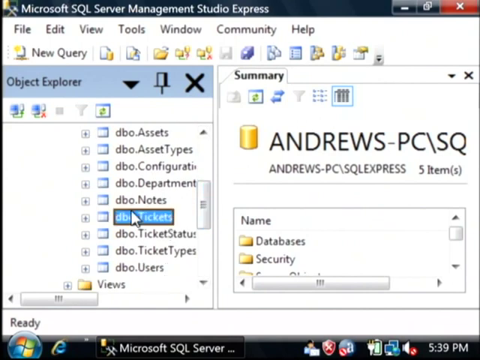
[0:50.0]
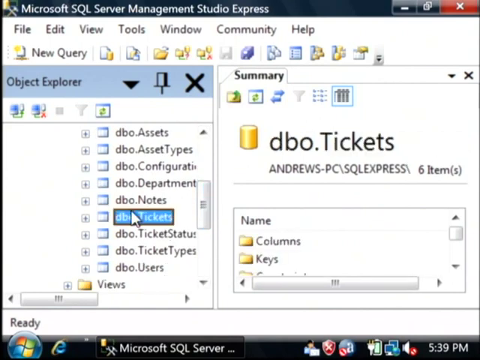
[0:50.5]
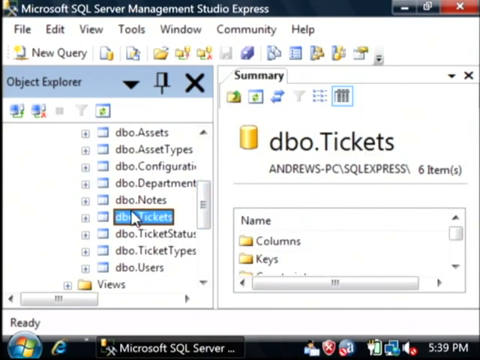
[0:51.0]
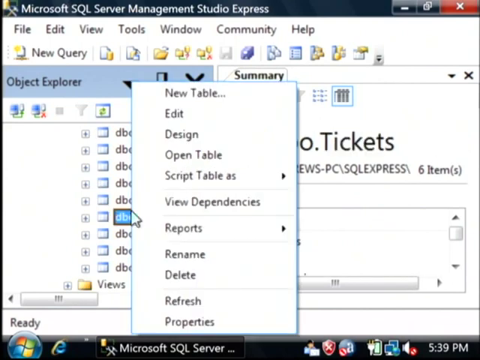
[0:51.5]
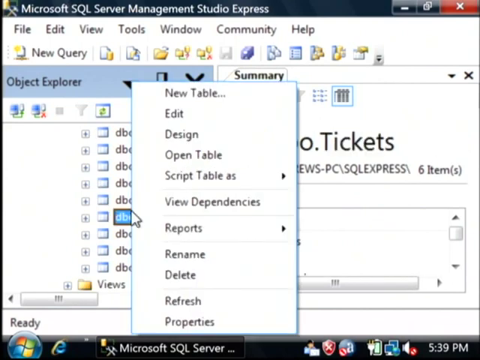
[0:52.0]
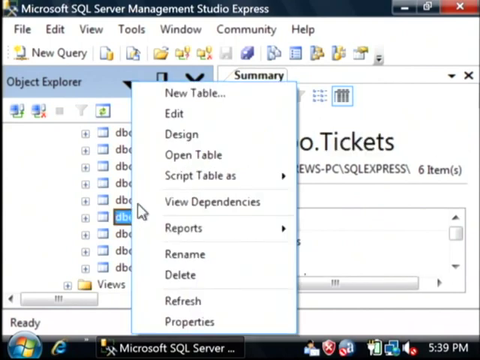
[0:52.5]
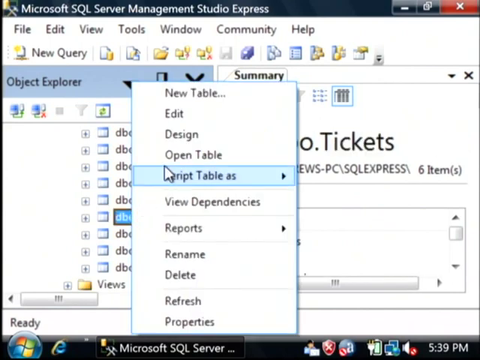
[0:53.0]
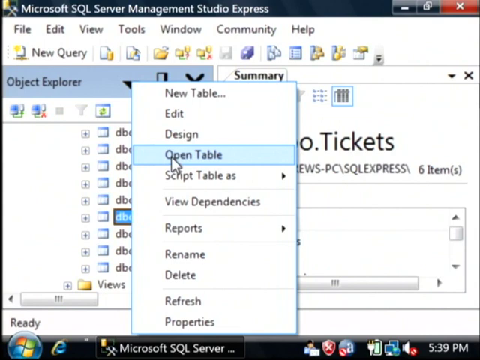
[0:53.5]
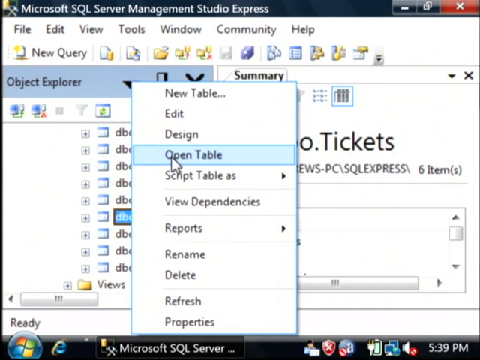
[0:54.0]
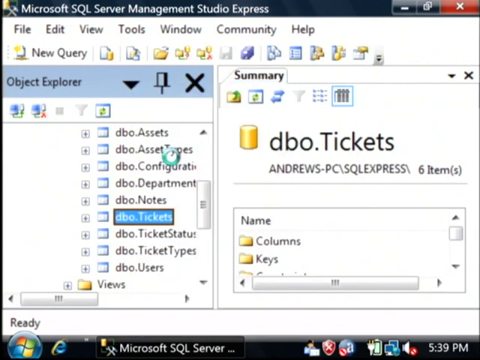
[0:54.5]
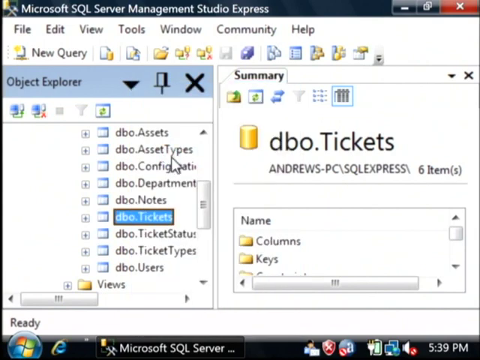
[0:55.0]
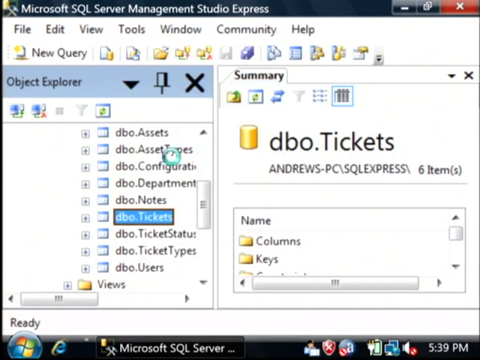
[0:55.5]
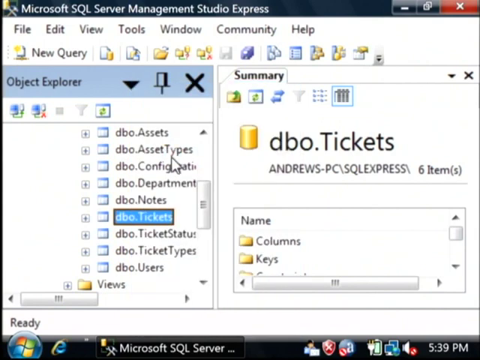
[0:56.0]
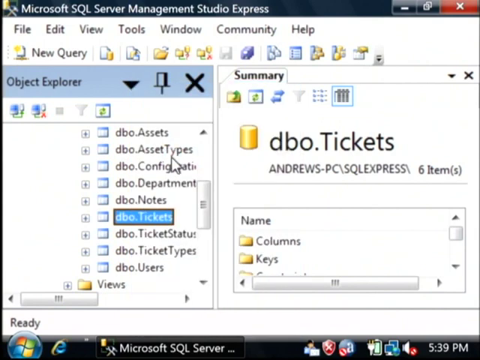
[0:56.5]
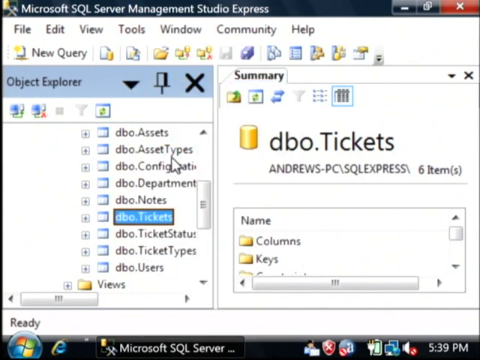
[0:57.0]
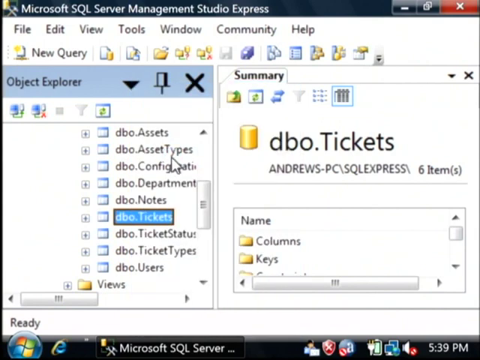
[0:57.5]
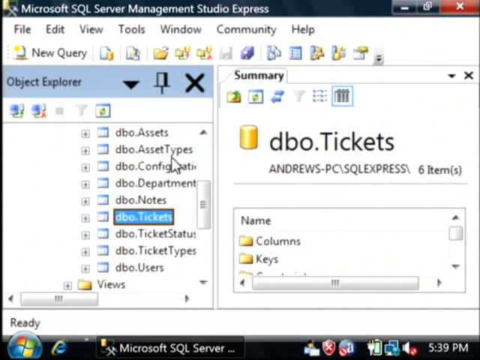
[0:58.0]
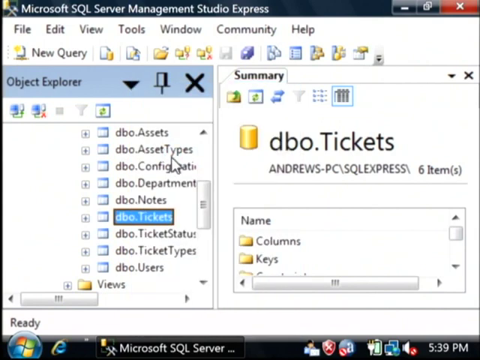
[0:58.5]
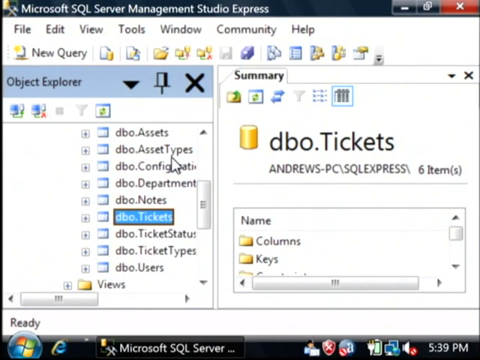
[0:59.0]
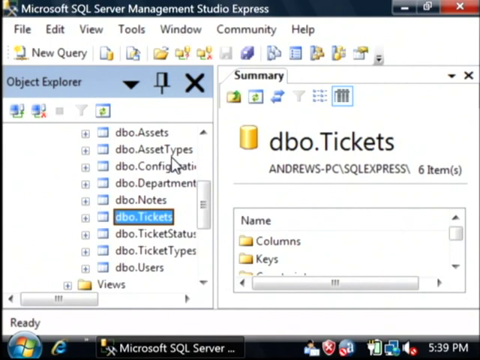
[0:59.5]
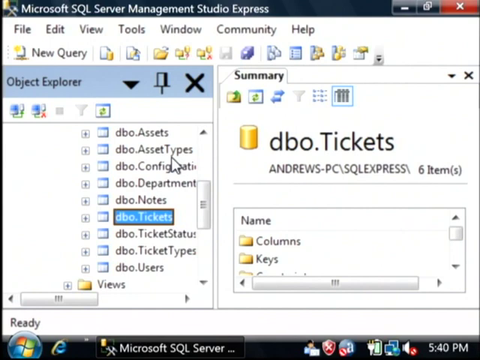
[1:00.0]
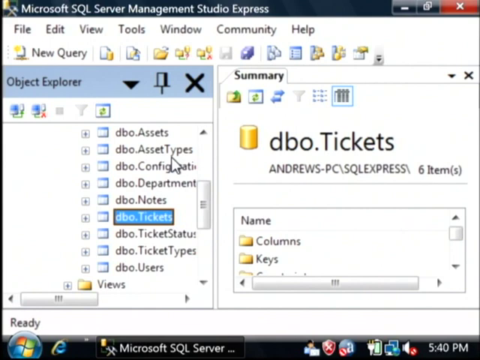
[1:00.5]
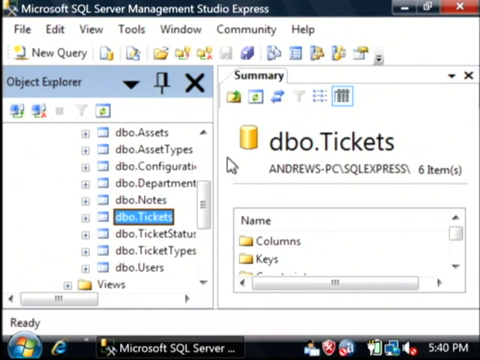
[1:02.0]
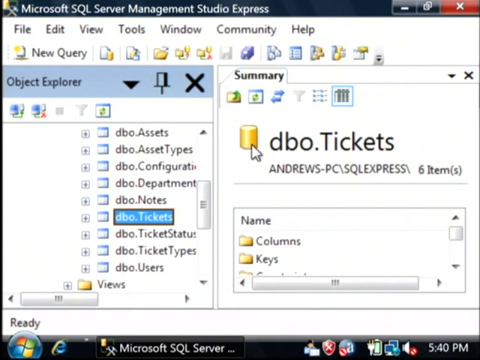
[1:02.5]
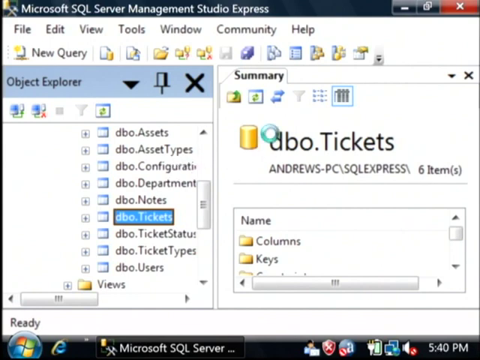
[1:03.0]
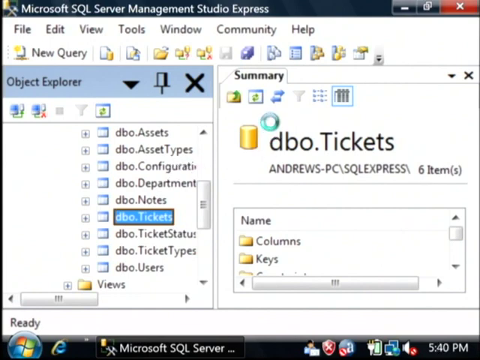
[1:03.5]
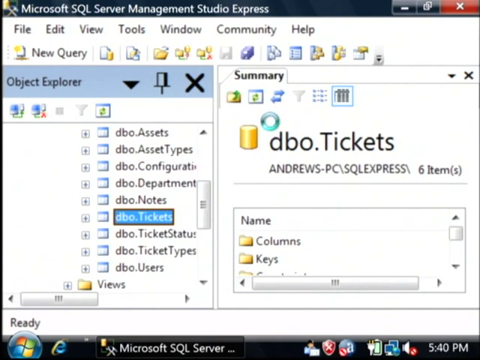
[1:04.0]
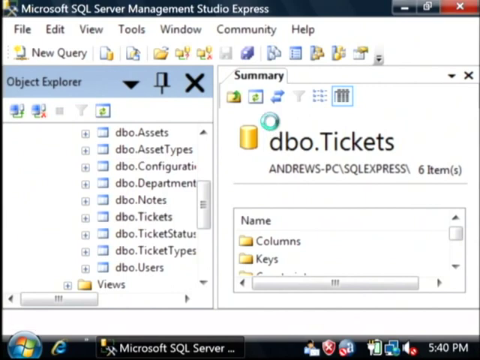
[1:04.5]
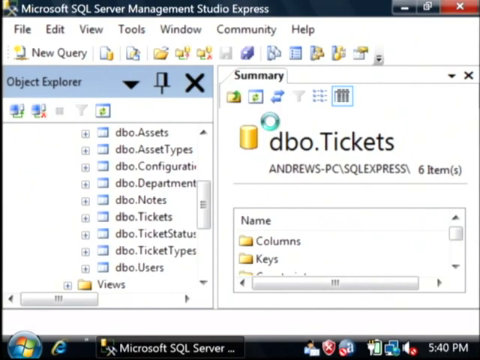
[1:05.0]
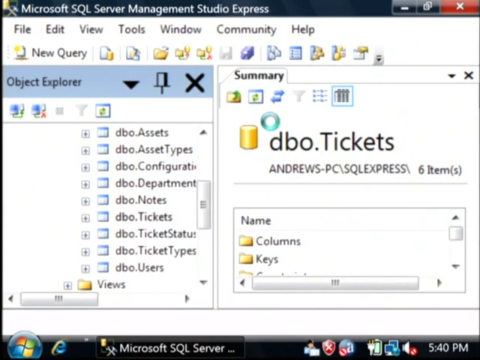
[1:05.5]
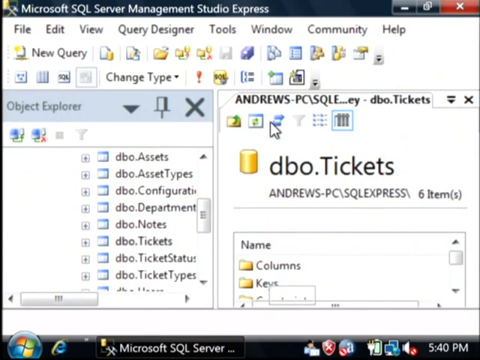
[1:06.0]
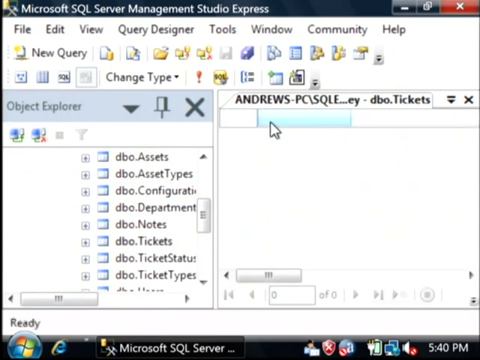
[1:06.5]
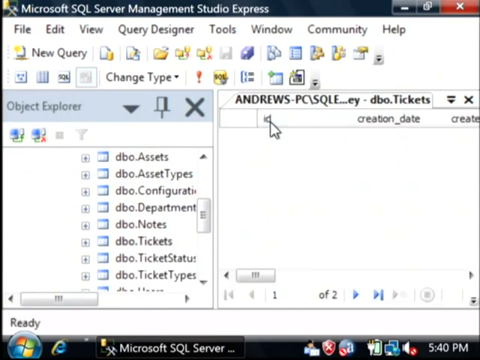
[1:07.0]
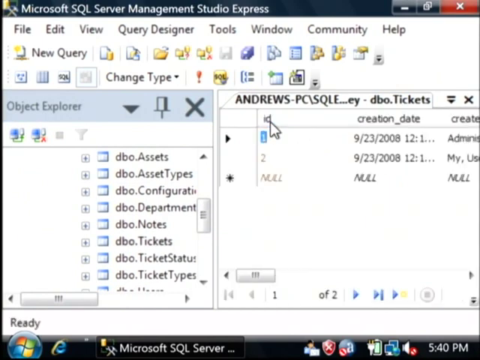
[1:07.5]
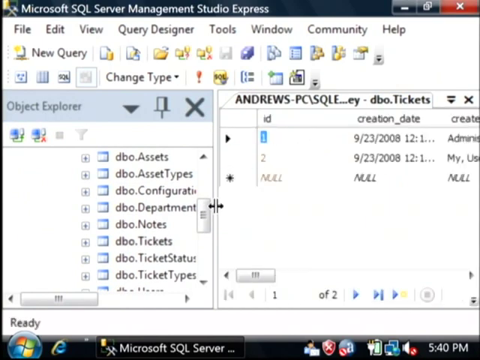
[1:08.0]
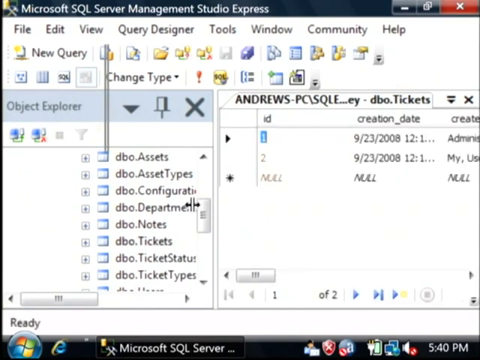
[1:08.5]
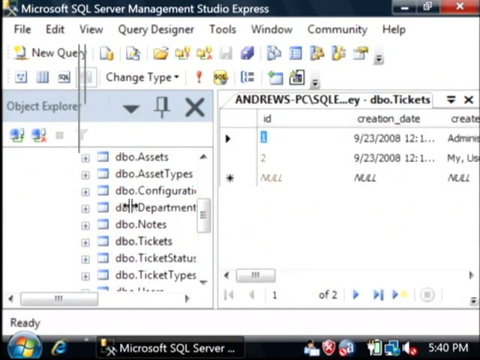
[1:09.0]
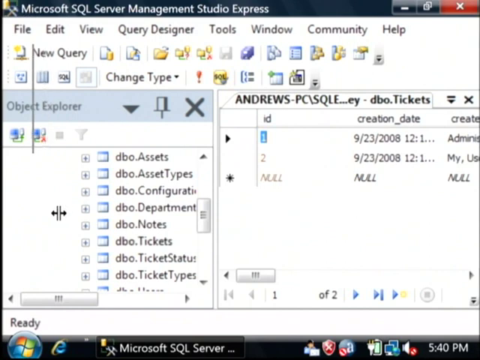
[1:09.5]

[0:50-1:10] The screen is recorded while the user interacts with Microsoft SQL Server Management Studio Express. In the left-hand menu, the object explorer, some database folders have been expanded to load and select tables. The user clicks on the database table for tickets, opening an option pop-up menu, and moves the cursor to the fourth option down, "open table", which is highlighted in blue. When it is clicked, it begins to load; the cursor shows a donut-shaped icon with a moving green animation that looks like it is loading. Eventually the table loads in the right-hand pane. The user then makes the left pane smaller for a better view by dragging its right side to the left.